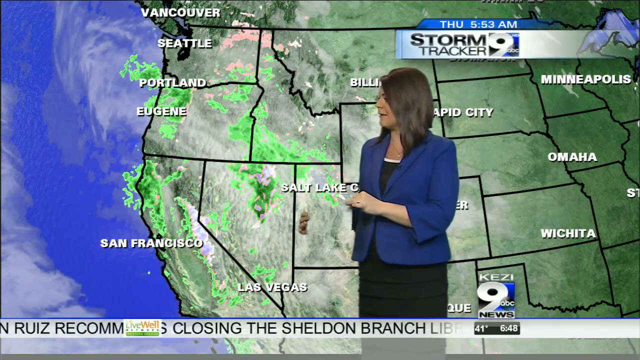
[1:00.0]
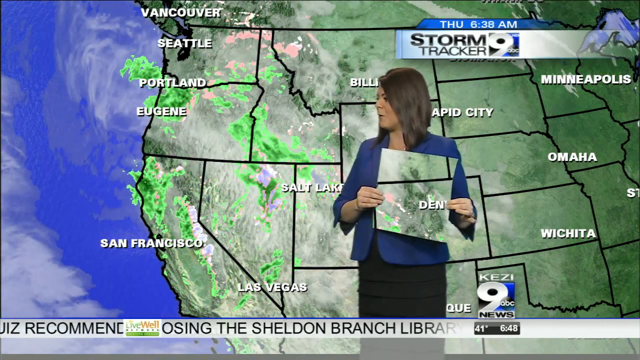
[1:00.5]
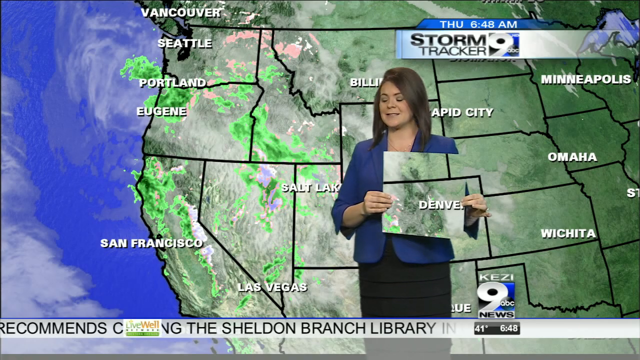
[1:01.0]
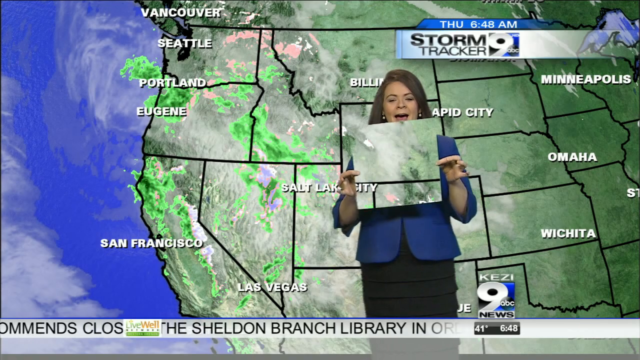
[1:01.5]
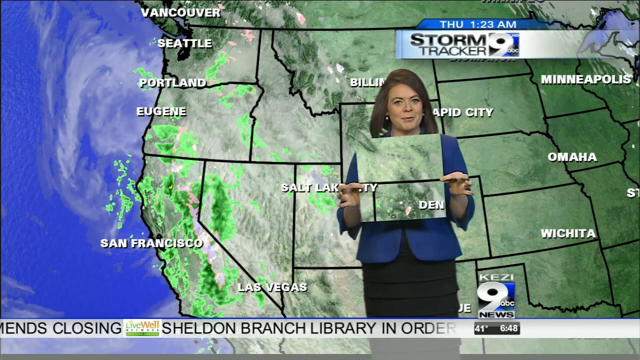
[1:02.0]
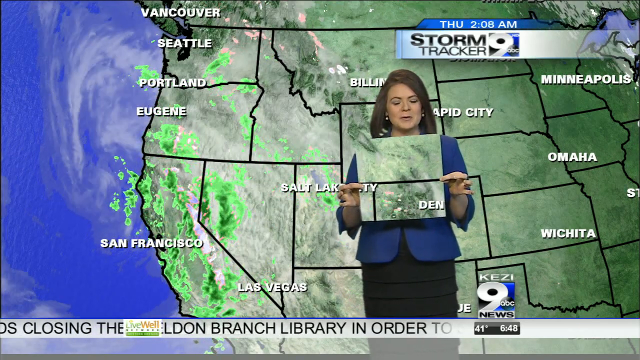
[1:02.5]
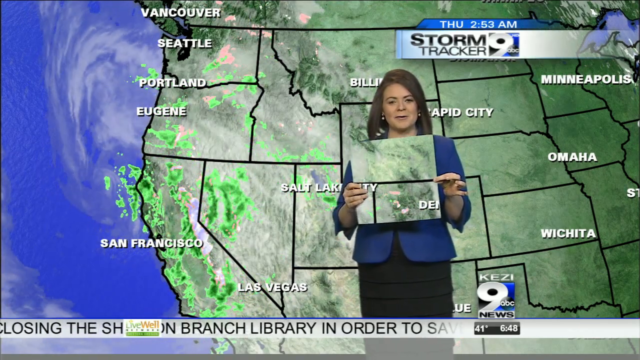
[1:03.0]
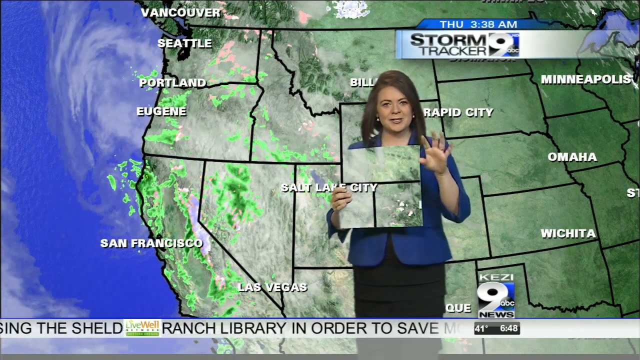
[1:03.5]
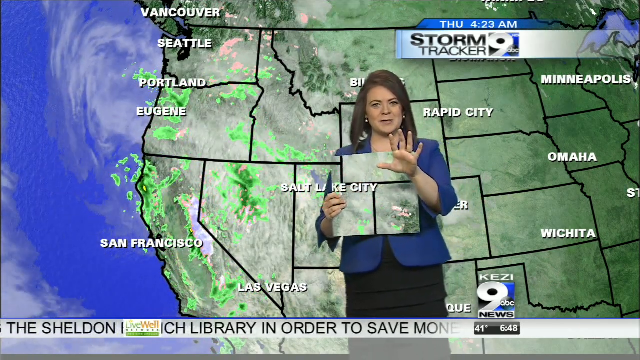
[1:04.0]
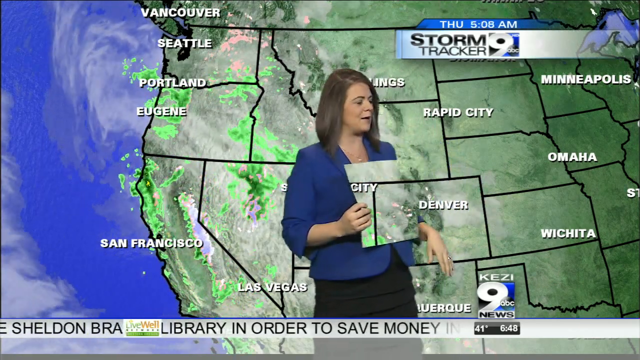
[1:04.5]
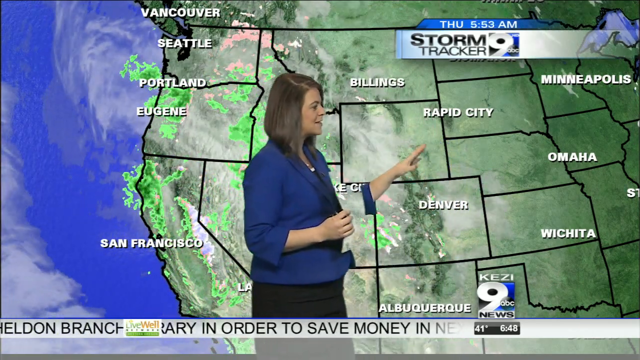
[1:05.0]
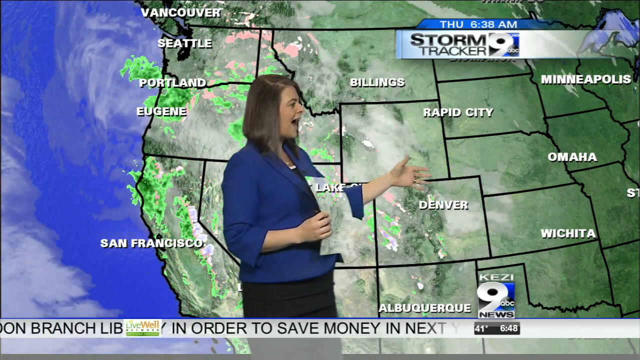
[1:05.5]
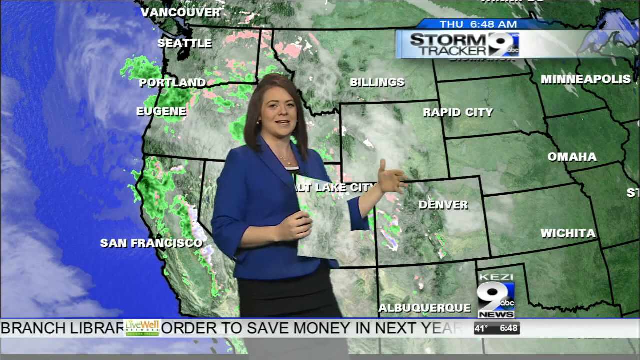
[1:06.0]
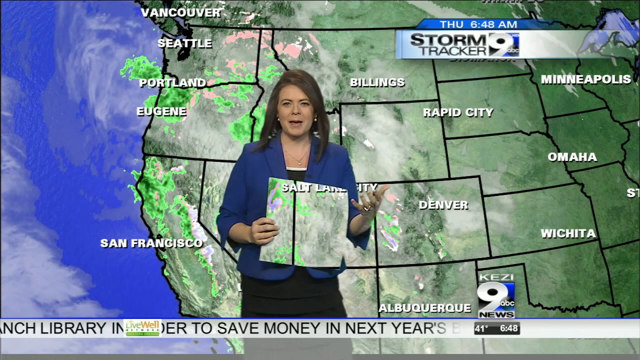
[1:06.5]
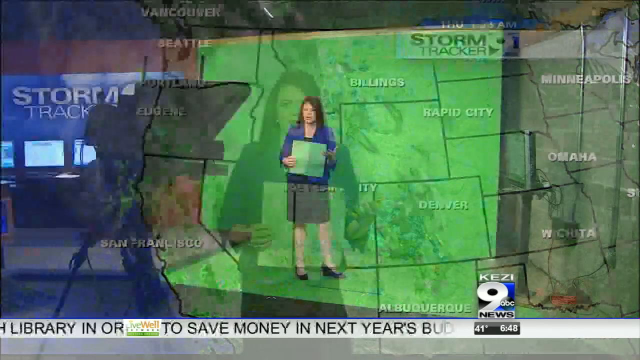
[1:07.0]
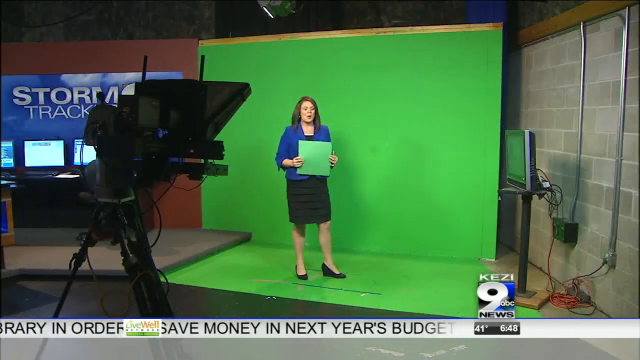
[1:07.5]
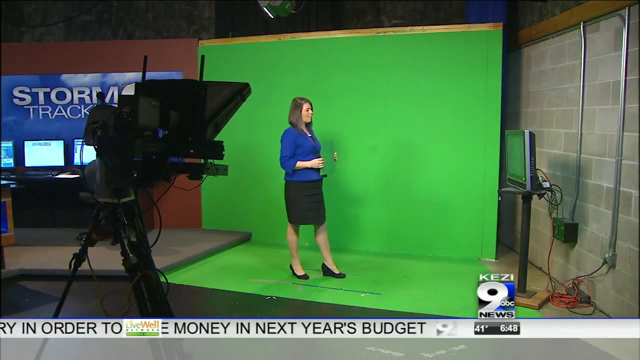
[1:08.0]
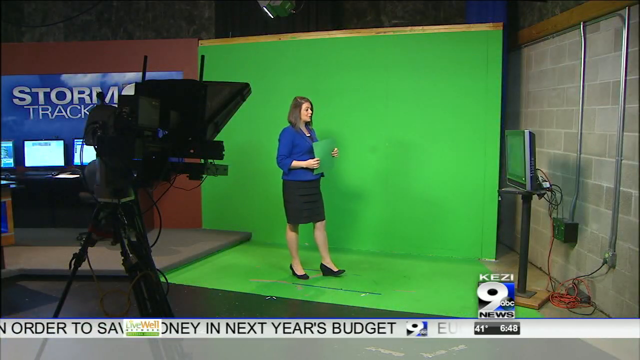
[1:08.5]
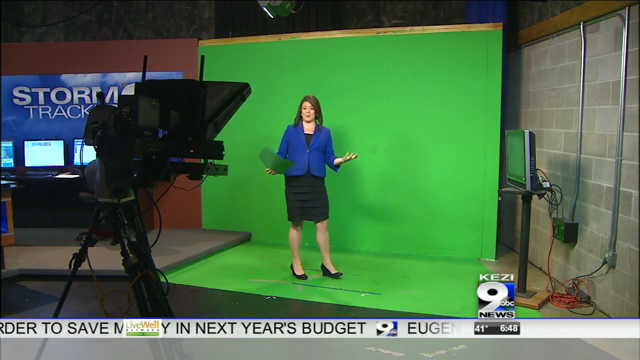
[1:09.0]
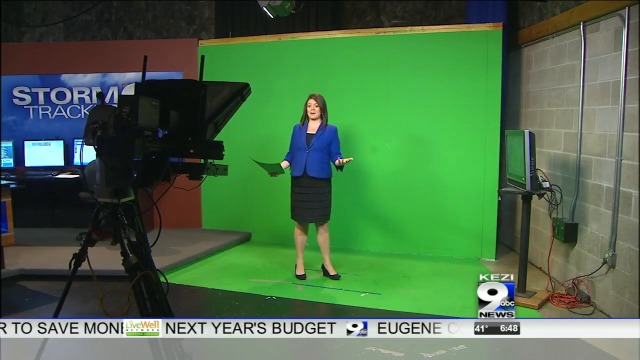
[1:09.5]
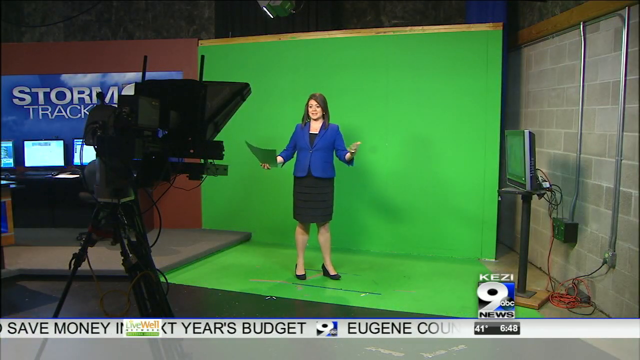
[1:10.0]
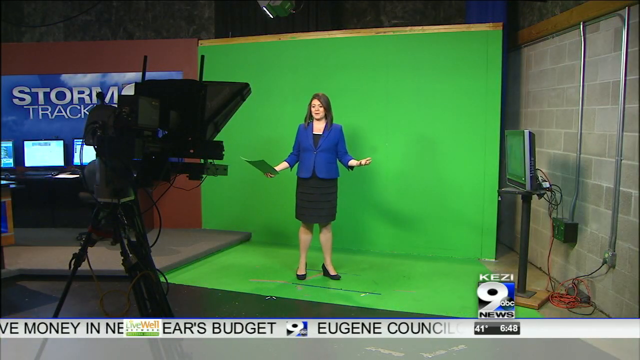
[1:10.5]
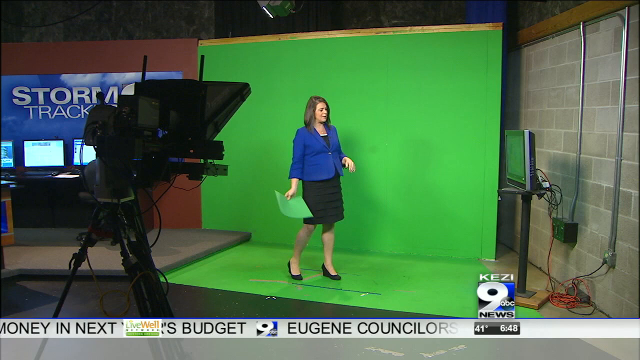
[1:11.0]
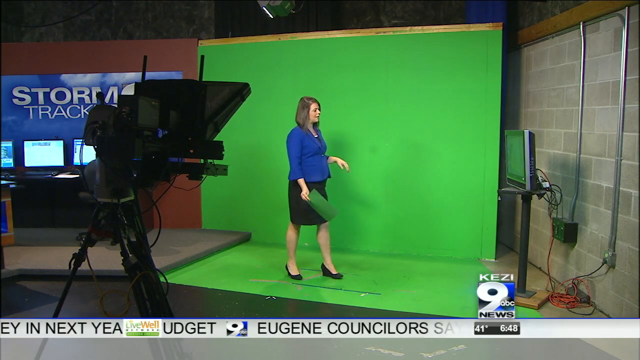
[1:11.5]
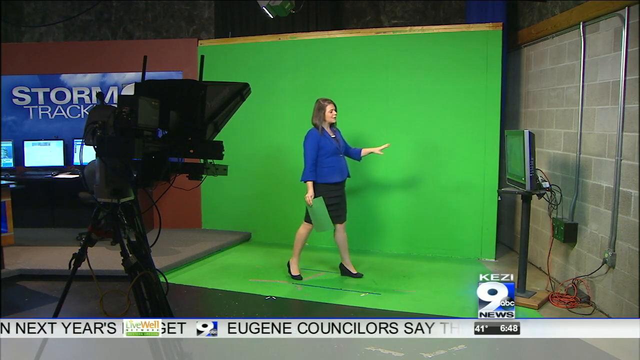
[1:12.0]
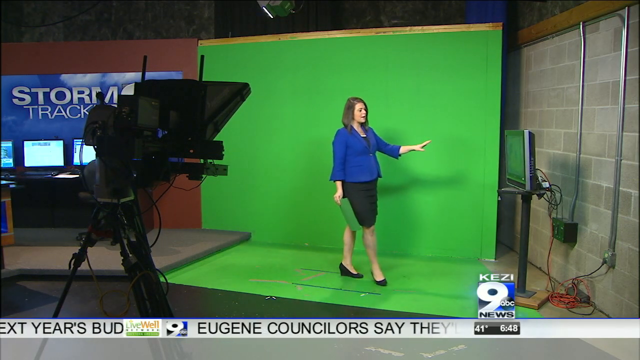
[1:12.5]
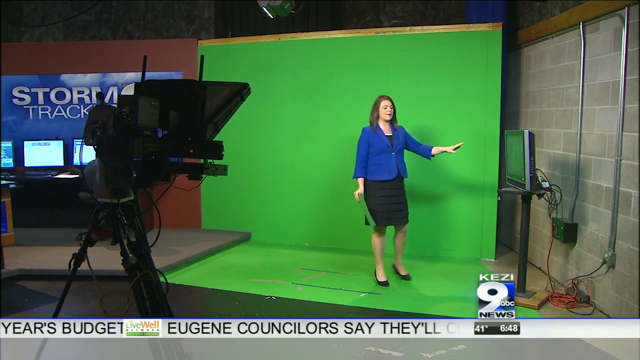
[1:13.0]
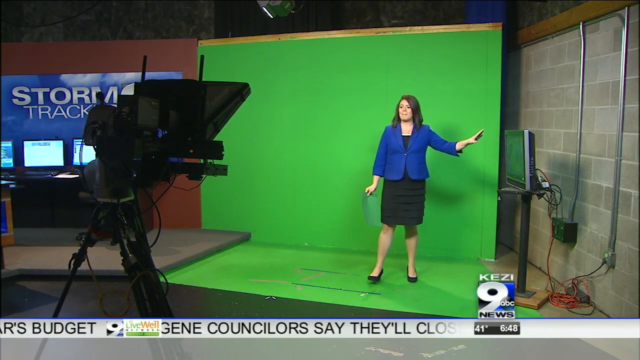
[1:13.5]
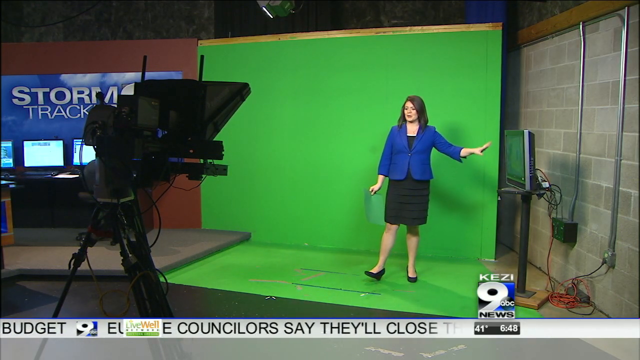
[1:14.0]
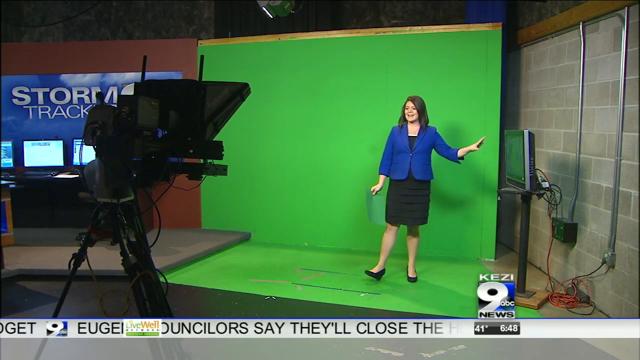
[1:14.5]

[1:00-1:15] A weather report is under way in a news station. The meteorologist, a young woman in a blue suit jacket and black dress, stands in front of a green screen onto which an image of the United States is projected, with a weather system shown over the California region. She turns and points at various areas. She holds up a square of paper or something similar in front of her that interacts with the green screen, so when she holds it in front of her it blocks the view of her a little and the projected map shows instead. Then comes a behind-the-scenes style view: a panned-back shot shows a camera off to the left and the green screen behind her with no imagery on it, so she is seen standing in front of a green screen holding a green piece of paper. Off to the right there is a concrete or cinder block style wall, with a computer monitor off to the side in front of it and some cords hanging from the monitor. She walks over and points at the monitor while talking.